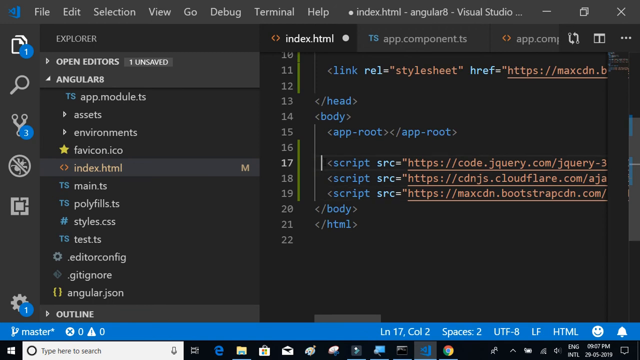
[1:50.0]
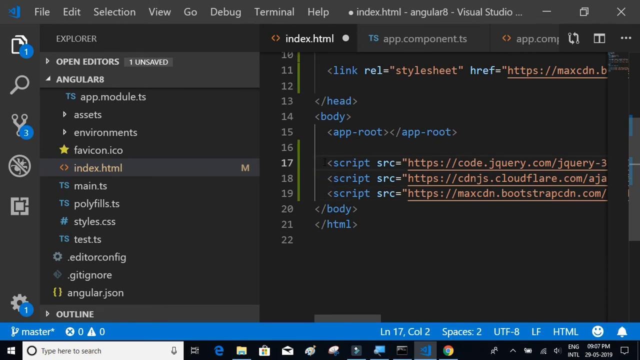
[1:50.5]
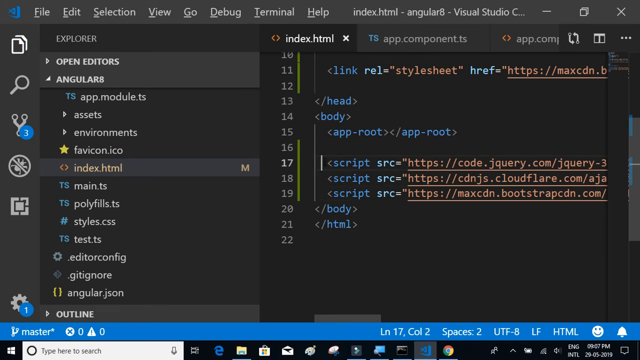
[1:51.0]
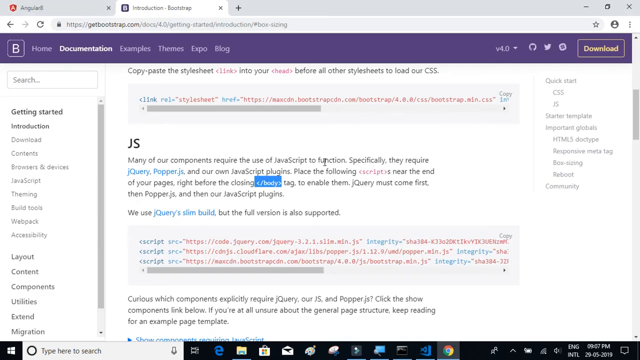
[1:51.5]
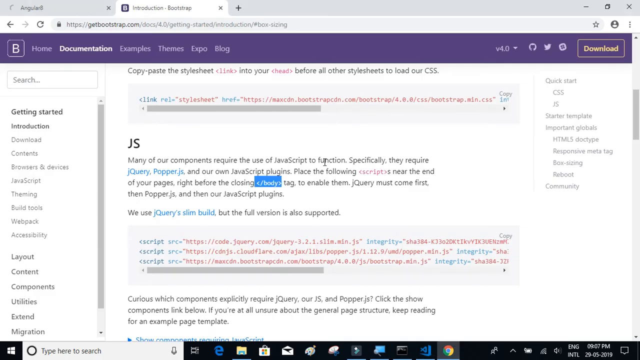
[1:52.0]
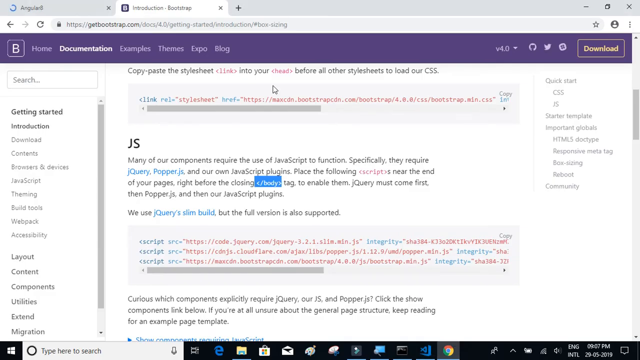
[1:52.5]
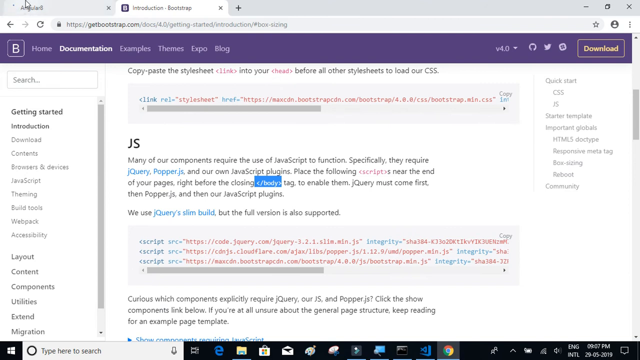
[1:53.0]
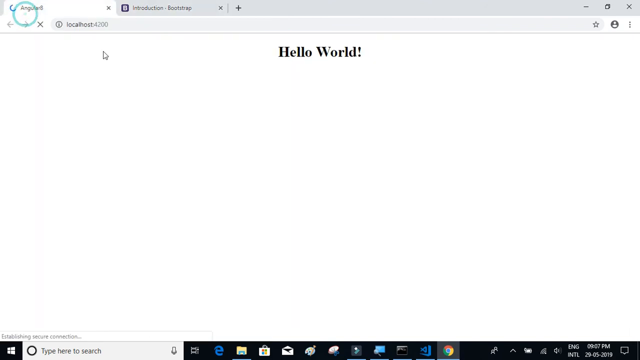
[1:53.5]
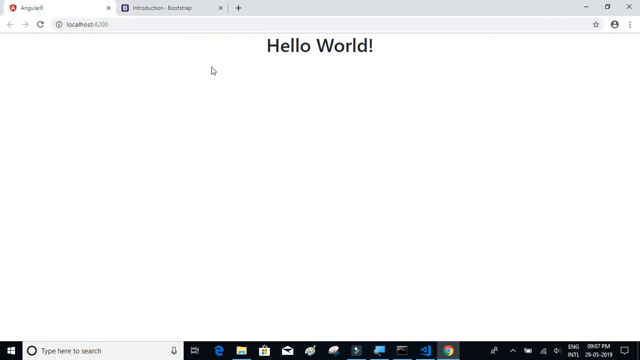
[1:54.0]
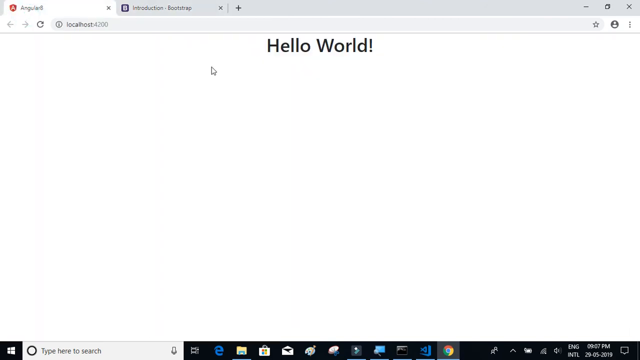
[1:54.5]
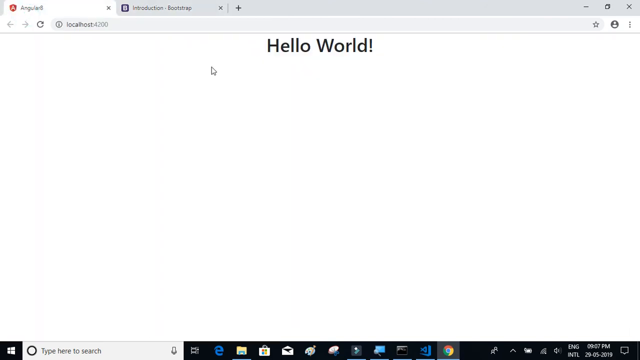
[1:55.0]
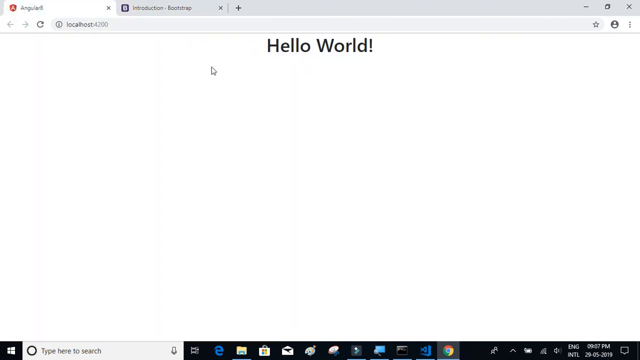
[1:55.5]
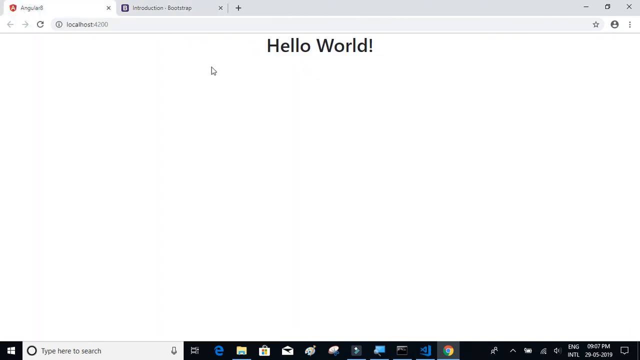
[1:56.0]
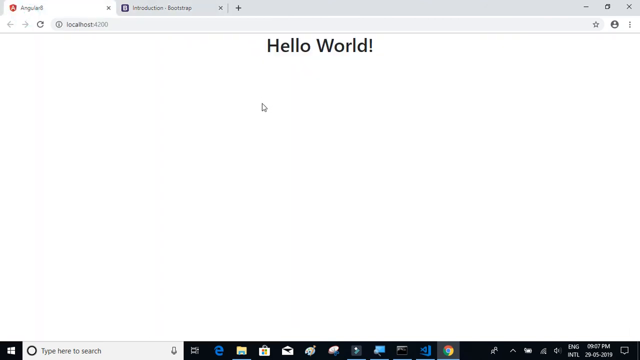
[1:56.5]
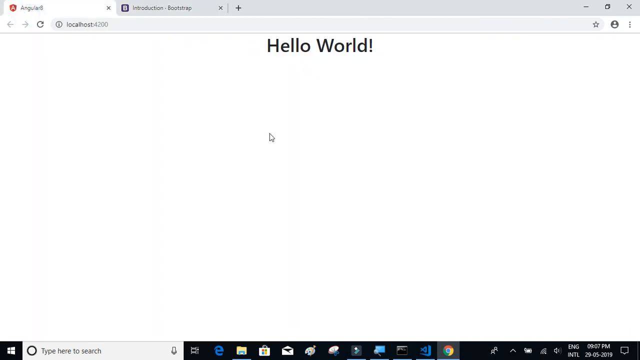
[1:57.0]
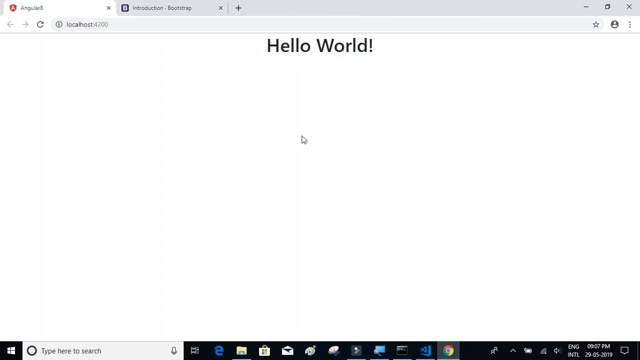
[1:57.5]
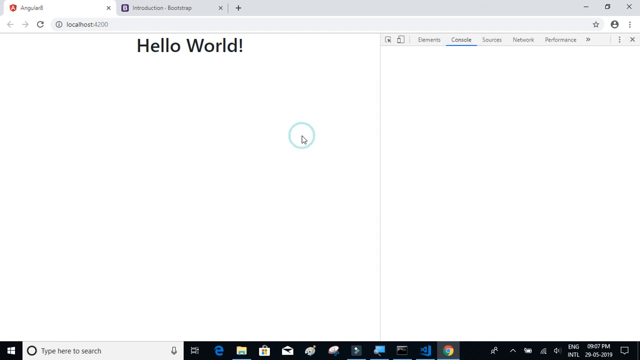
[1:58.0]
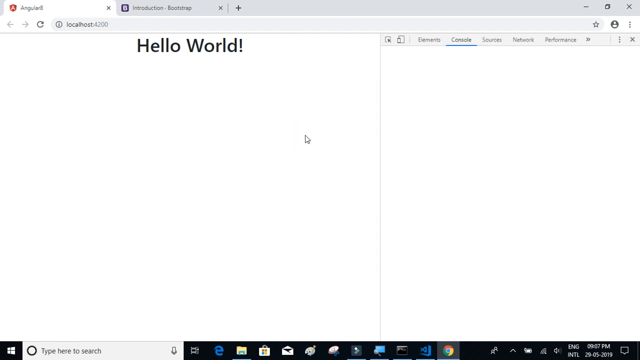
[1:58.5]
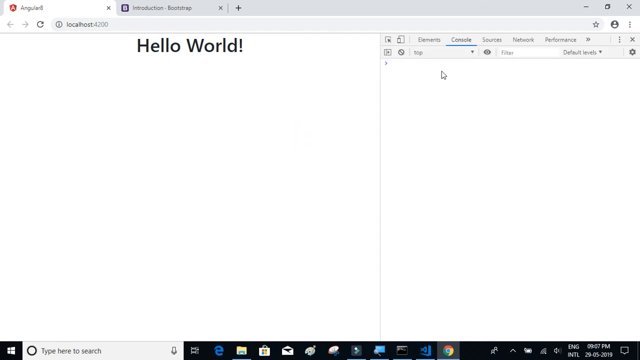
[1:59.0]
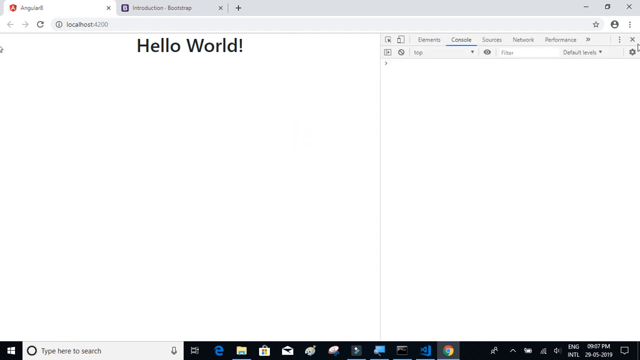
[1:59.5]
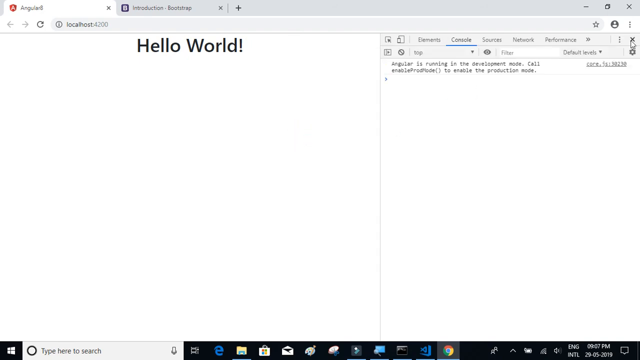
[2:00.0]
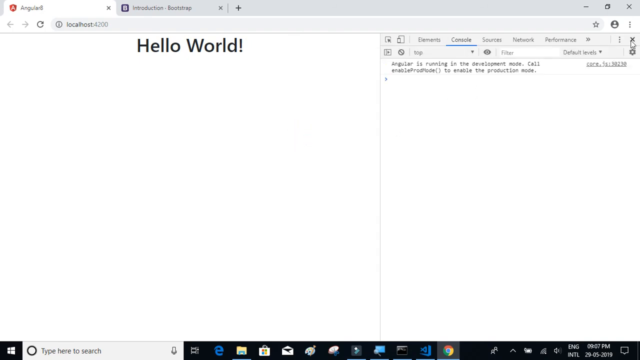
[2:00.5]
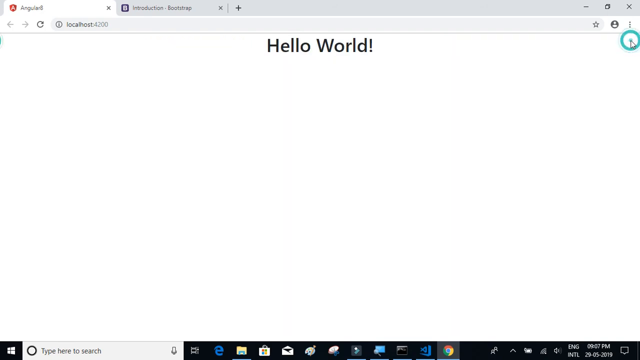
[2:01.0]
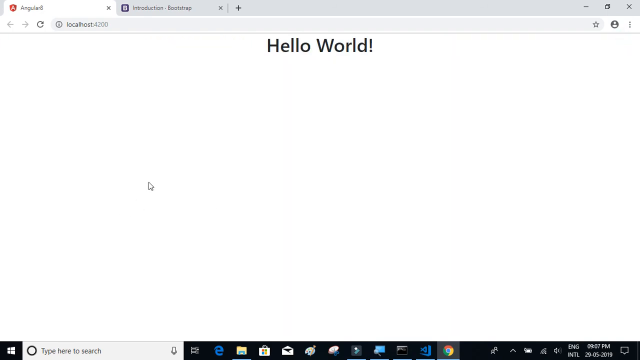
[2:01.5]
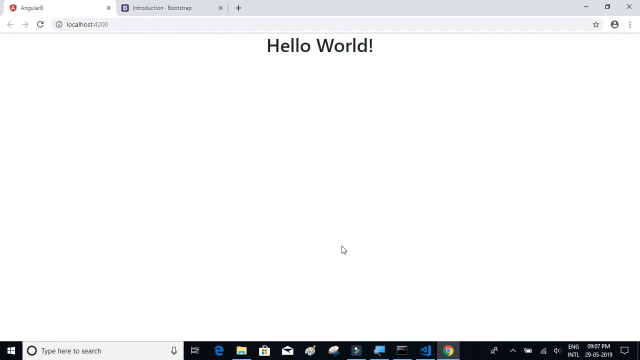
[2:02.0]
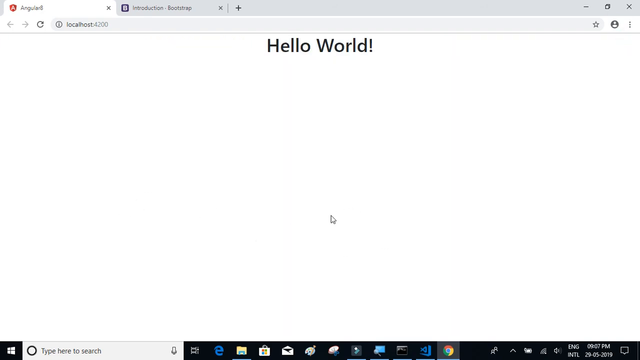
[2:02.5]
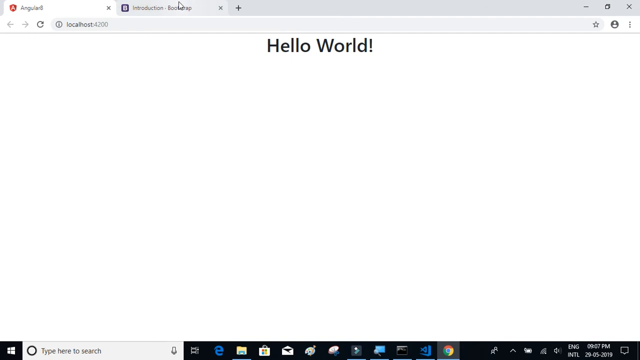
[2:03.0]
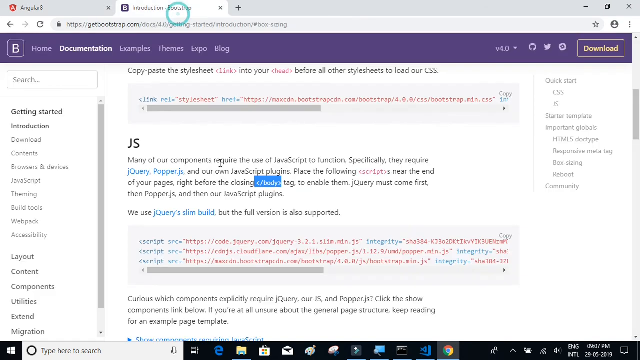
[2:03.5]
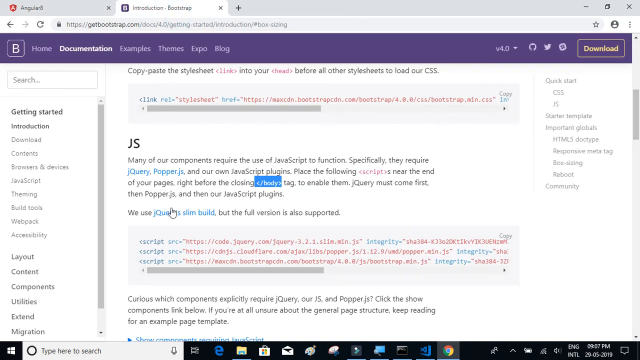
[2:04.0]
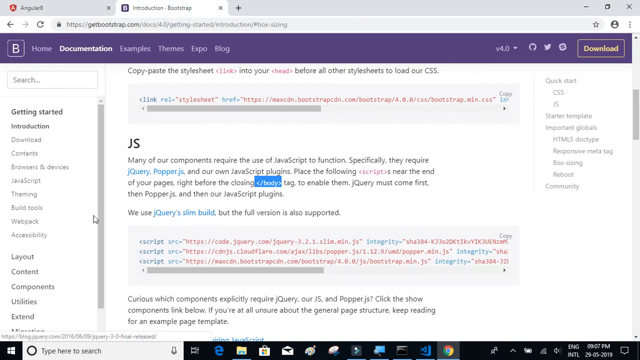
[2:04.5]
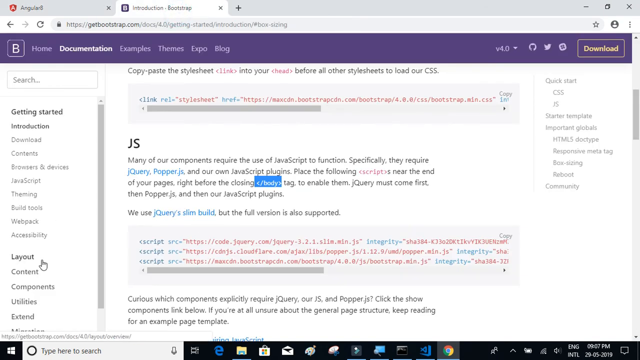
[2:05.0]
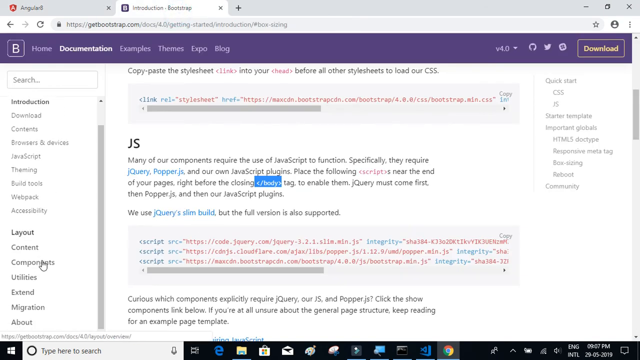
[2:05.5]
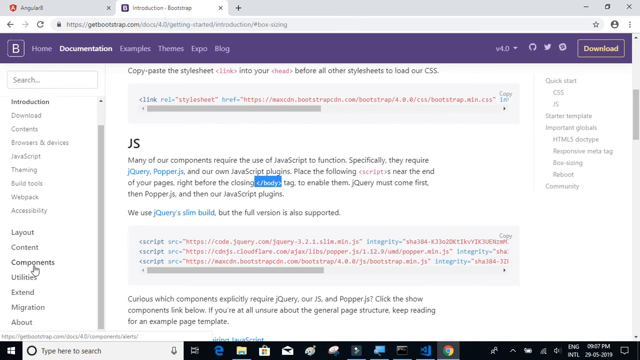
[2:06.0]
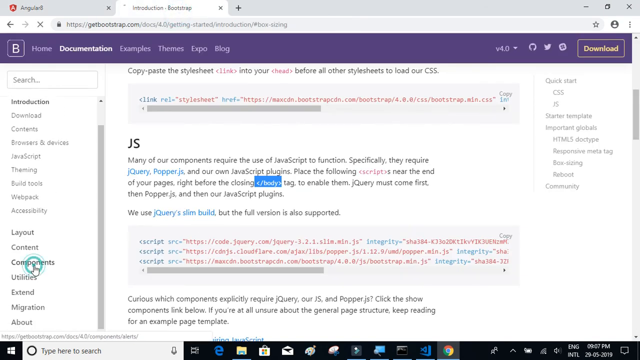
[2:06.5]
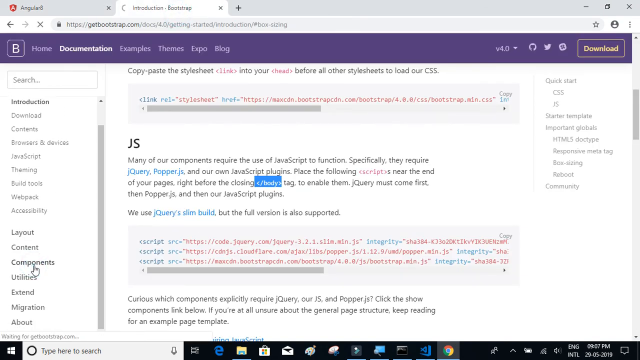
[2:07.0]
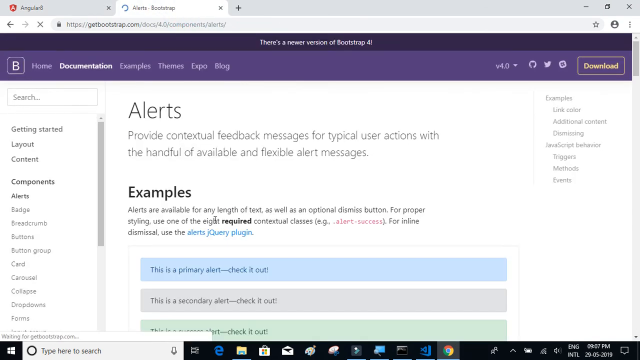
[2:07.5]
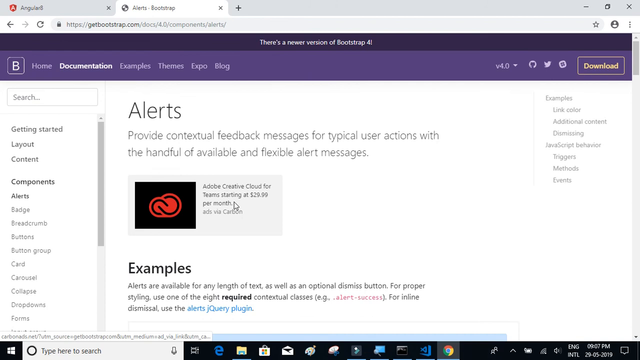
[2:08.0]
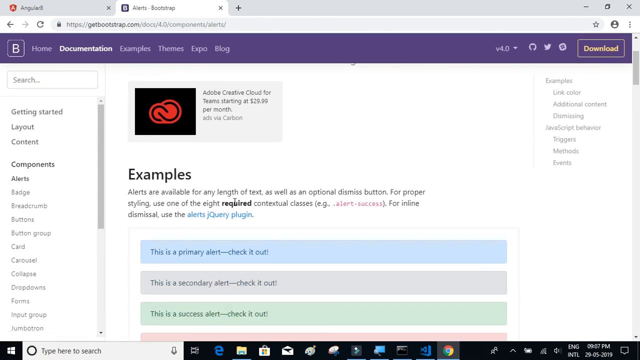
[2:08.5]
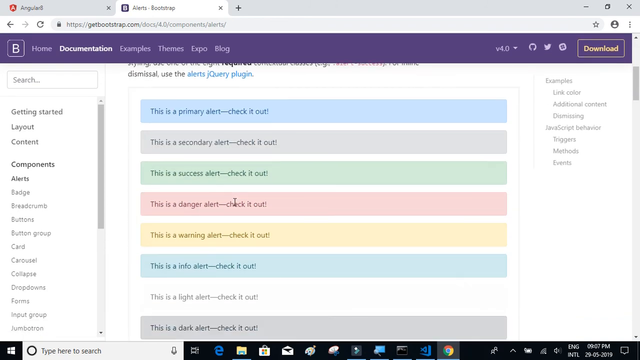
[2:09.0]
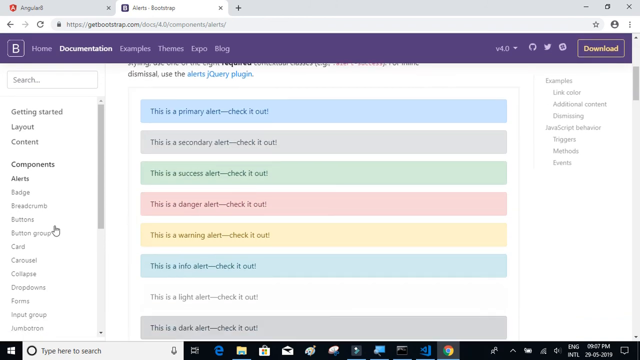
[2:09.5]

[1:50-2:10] A menu appears on the left of a page where the user is doing maybe JavaScript or other computer programming. The menu shows the words "Explorer" and "Open Editors", with "1 saved" beside it, then "Angulars", "Assets", "Environments", "Fabricon", "Test", "Editor" and "Configurations". Scripts the user is writing are also visible. The cursor moves back and forth between a tab at the top that says "Angulars" and, right beside it on the right, a tab that says "Introduction Bootstrap". The Angulars page just says "Hello World". Then "Hello World" appears on the right, with other areas on the left in a split screen. The user slowly clicks on "Components", a page pops up, and they click on the right.